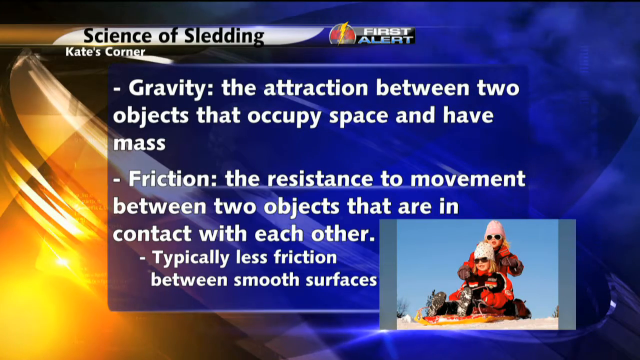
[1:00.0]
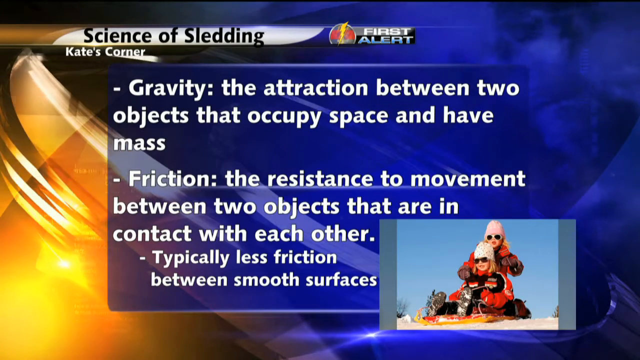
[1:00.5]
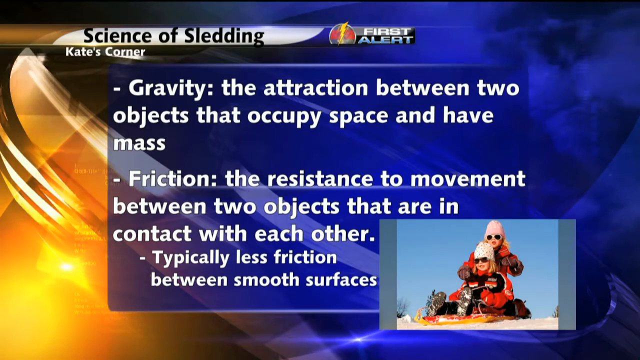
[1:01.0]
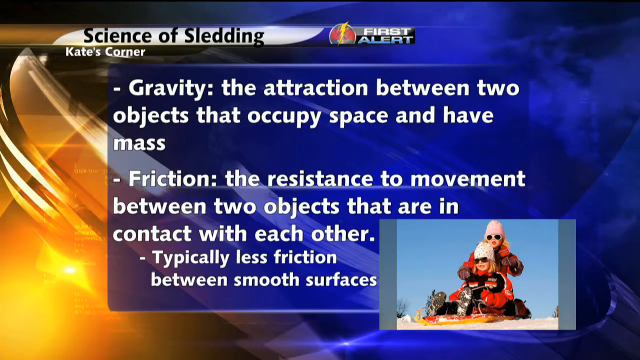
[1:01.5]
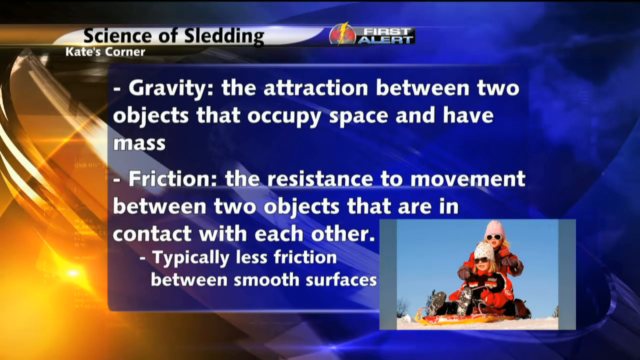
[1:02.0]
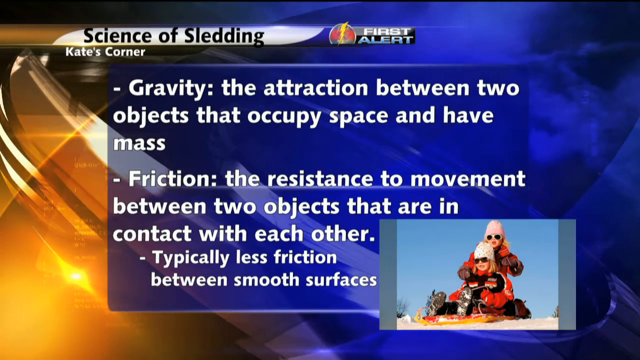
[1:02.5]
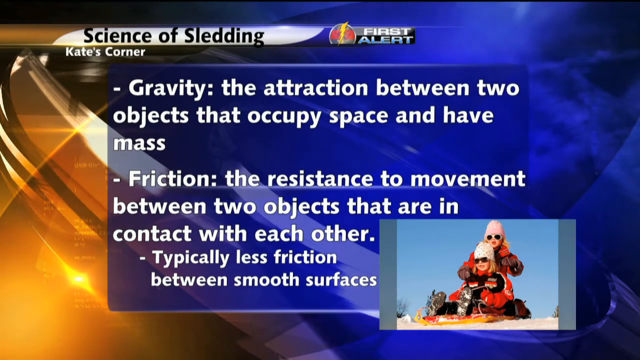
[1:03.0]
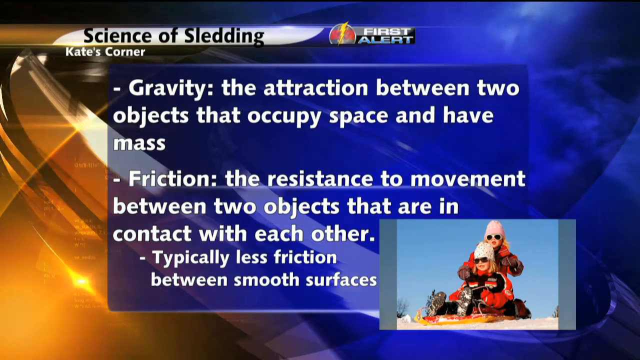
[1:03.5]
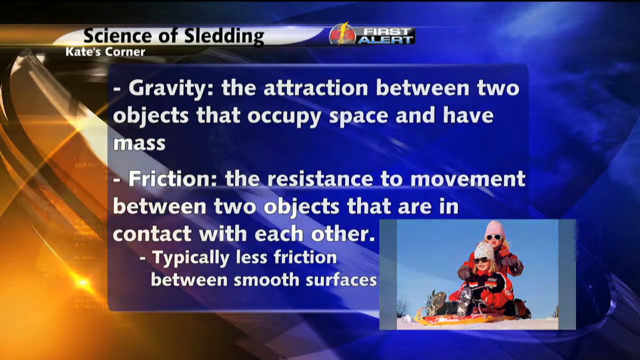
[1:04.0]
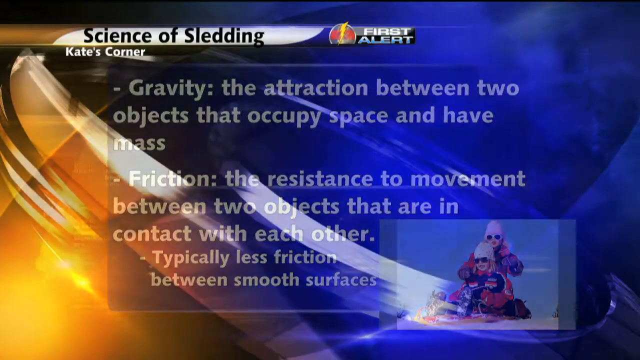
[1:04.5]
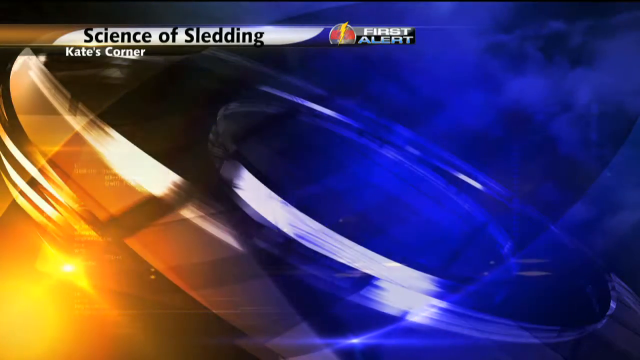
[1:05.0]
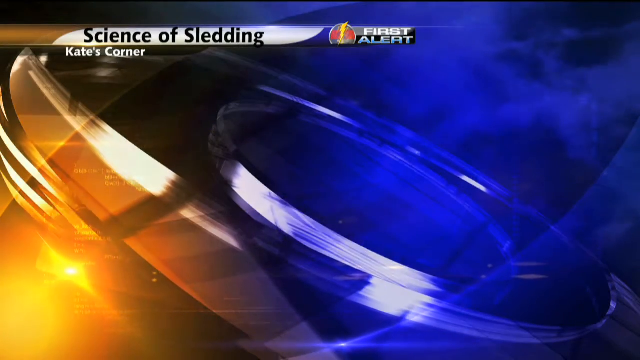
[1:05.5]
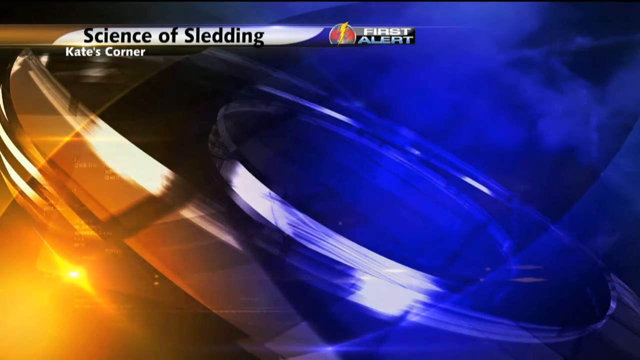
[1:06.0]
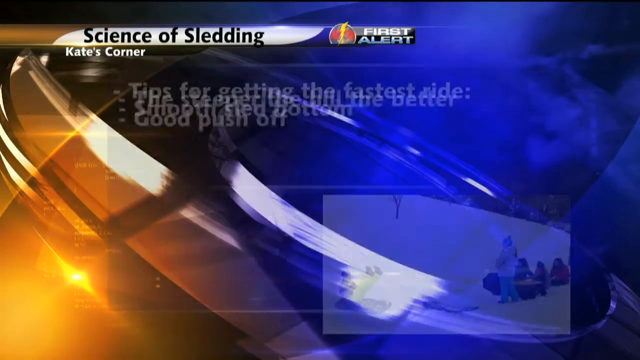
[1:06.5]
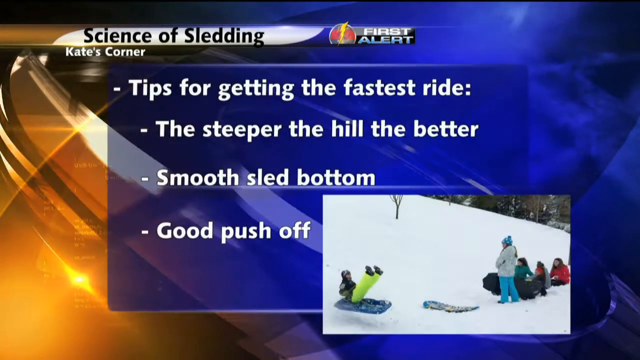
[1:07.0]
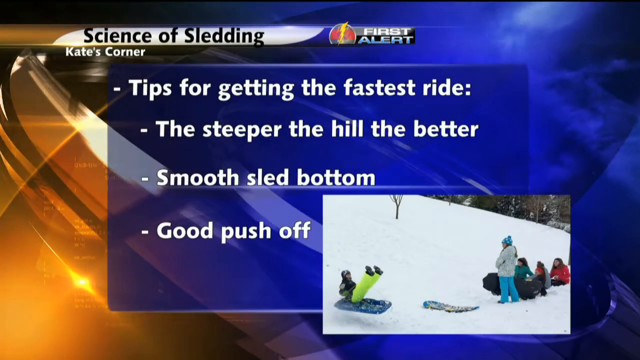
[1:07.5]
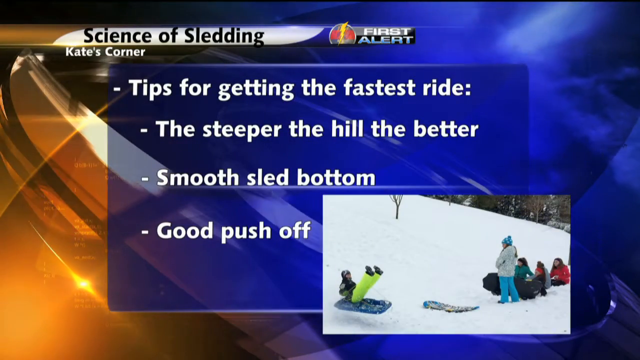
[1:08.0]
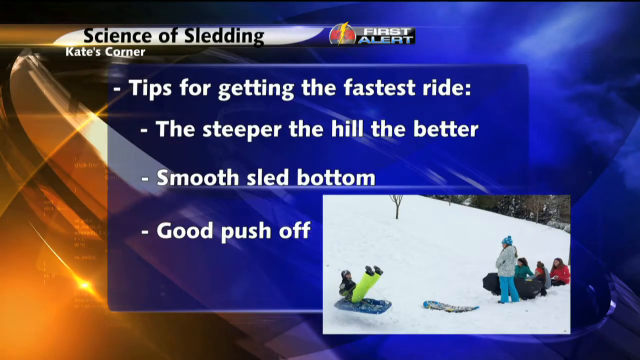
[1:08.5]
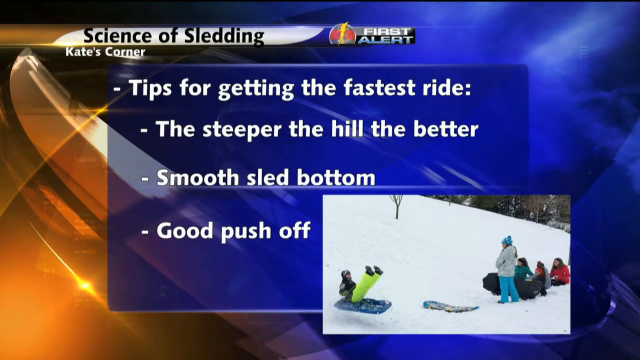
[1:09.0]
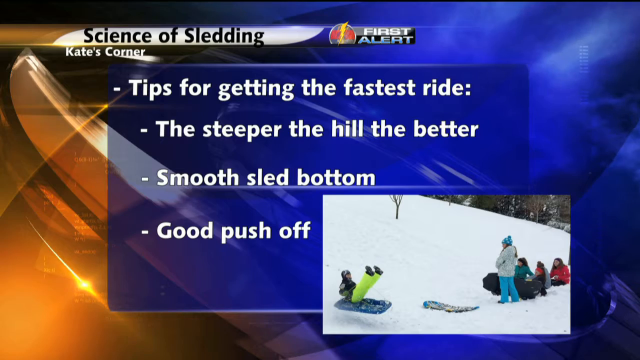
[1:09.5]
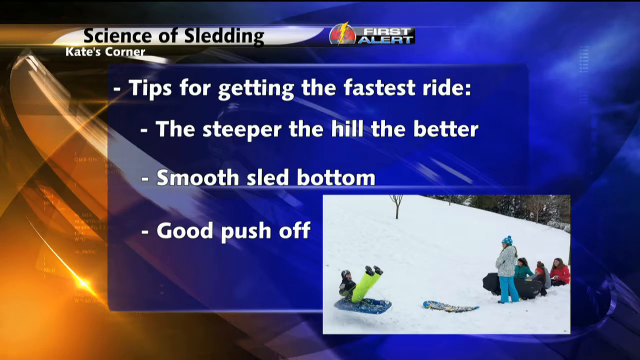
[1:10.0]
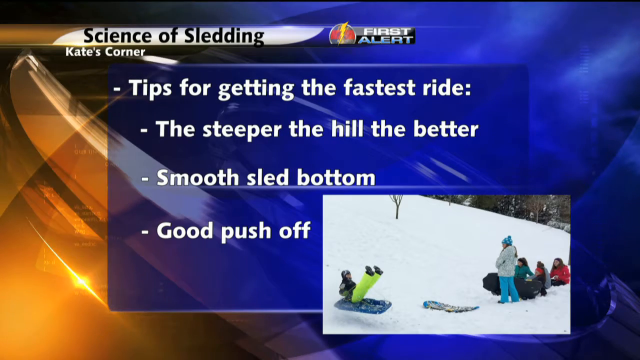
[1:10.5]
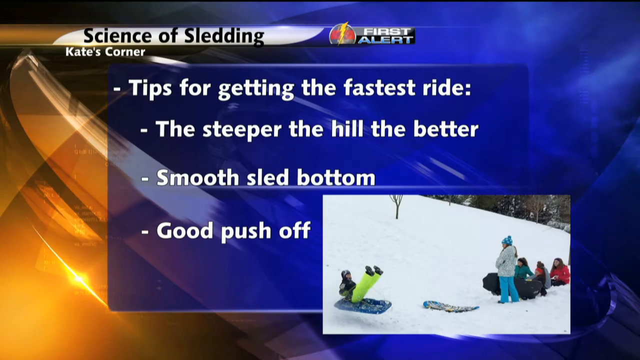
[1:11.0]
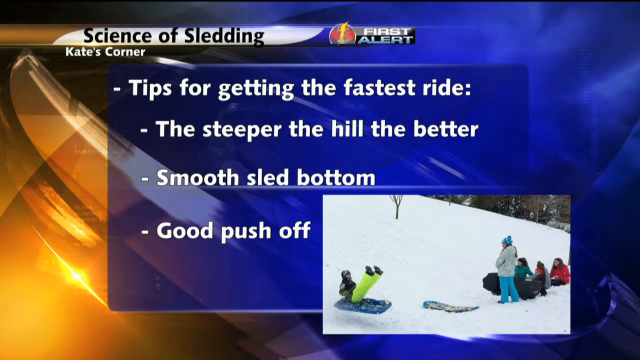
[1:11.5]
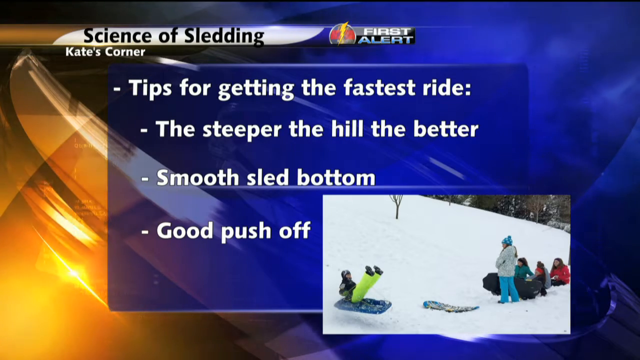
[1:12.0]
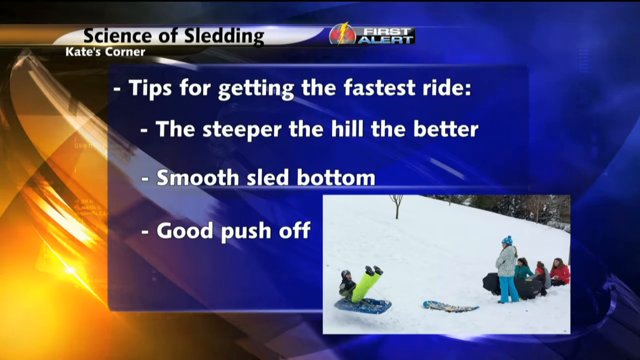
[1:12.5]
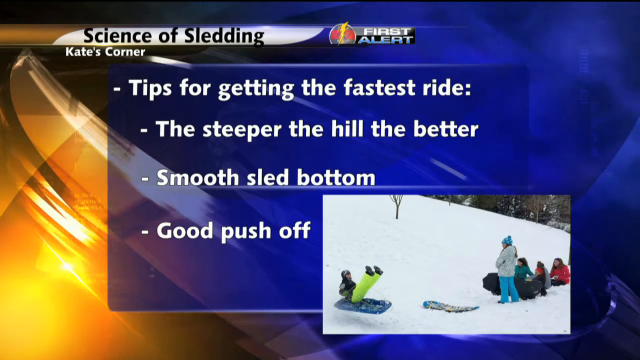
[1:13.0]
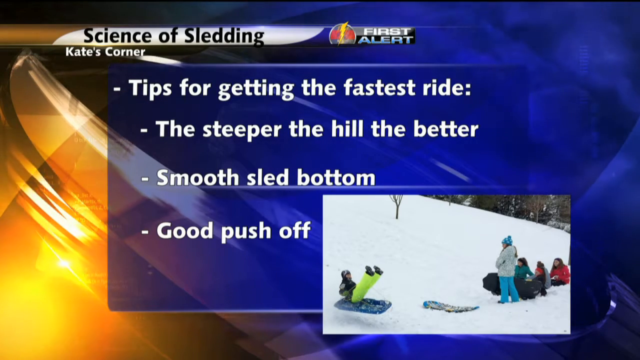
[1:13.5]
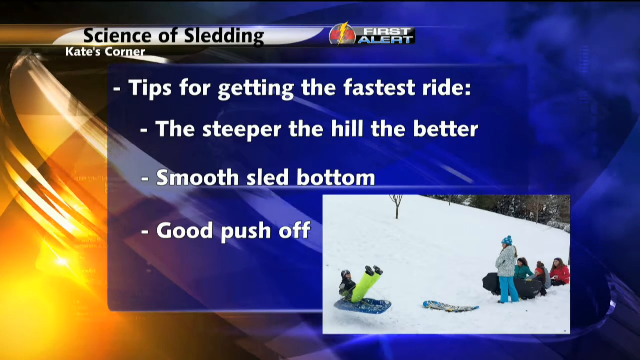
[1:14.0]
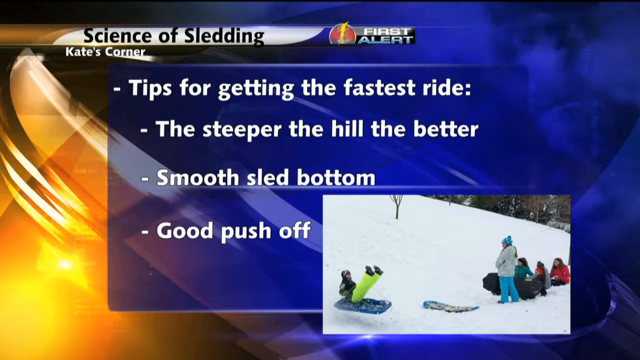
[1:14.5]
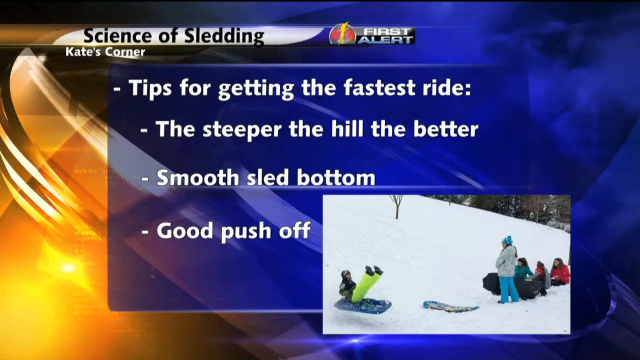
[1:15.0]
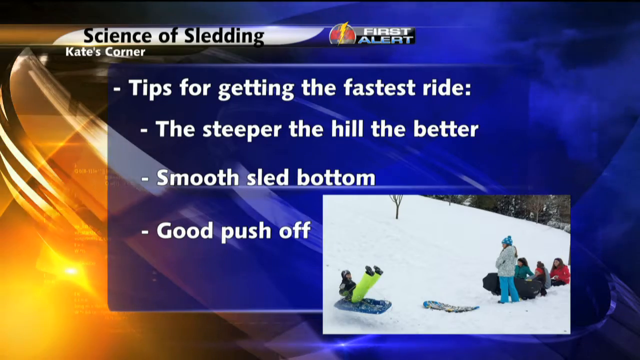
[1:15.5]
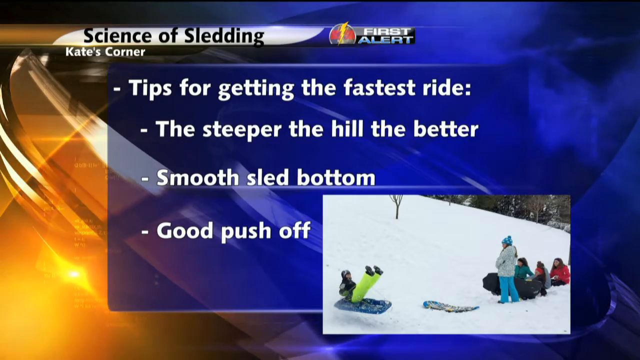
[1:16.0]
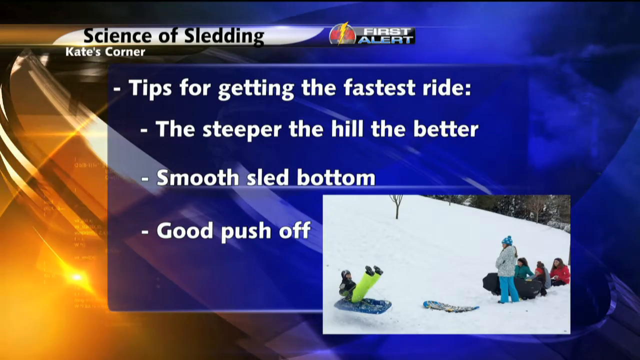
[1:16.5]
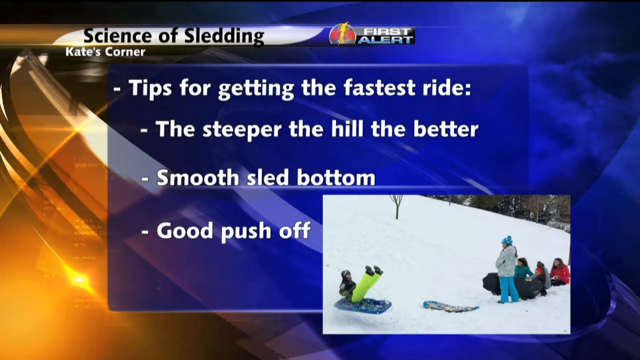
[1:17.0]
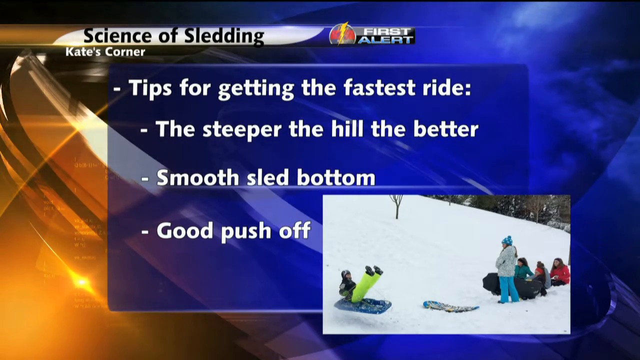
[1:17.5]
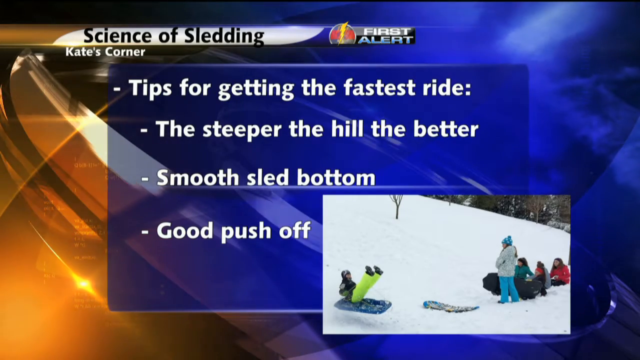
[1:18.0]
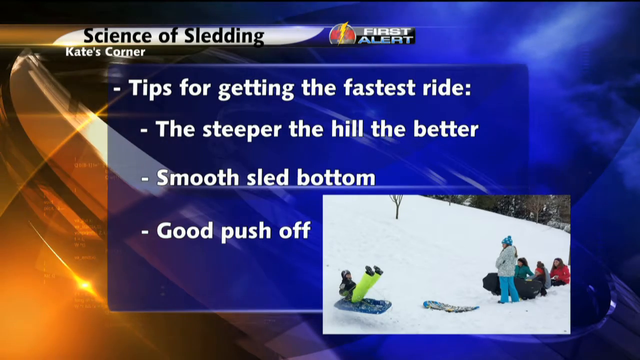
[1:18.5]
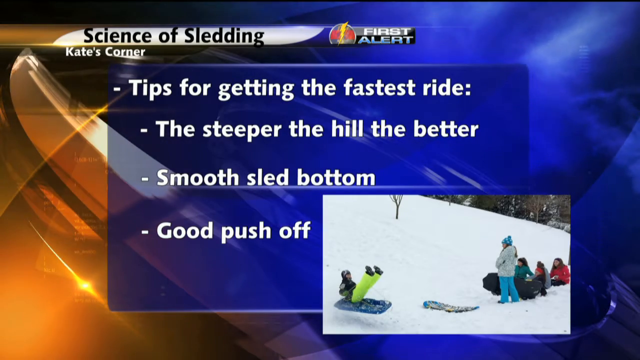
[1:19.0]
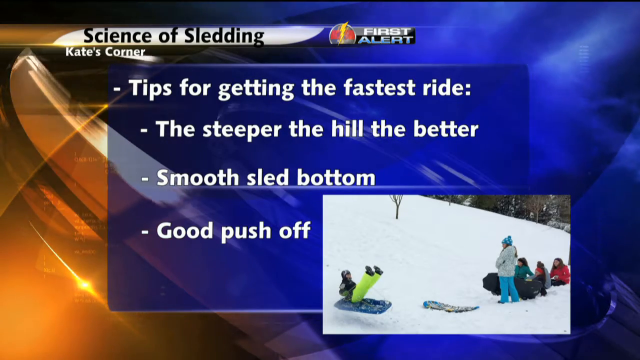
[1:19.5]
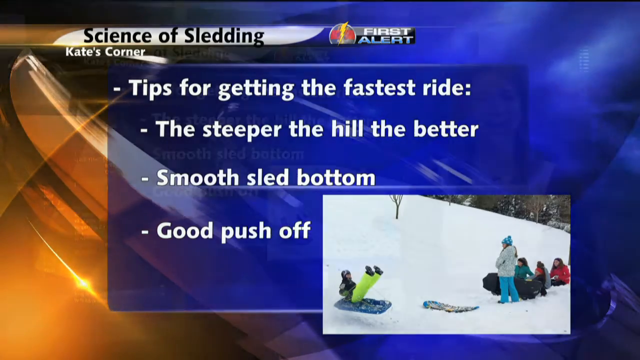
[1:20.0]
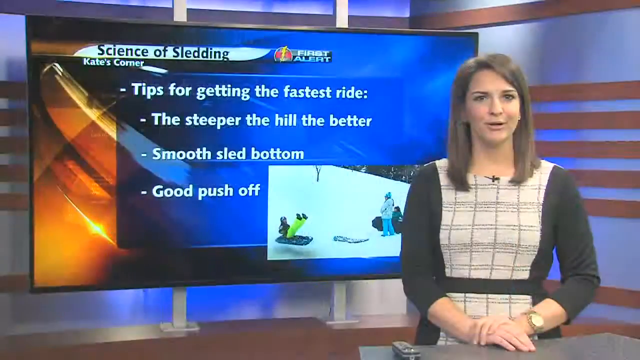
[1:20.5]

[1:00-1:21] The news segment is titled "Science of Sledding," with the first alert logo of the news station to the right of the title and "Kate's Corner" underneath it. In the lower right corner, next to the text, two kids sled down a hill on a sled that looks yellow. They wear red and black clothing and sunglasses, and appear to have blonde hair about shoulder length. The sky behind them is a clear blue. The text reads: "gravity, the attraction between two objects that occupy space and have mass, friction, the resistance to movement between two objects that are in contact with each other, typically less friction between smooth surfaces." The segment then transitions to the next part, which reads: "tips for getting the fastest ride, the steeper the hill, the better. Smooth sled bottom, good push-off." The image in the right corner now shows people sledding: three or four people on the right are holding their sleds or sitting on them, and on the left a person reaches the bottom of the hill sitting on a blue sled with their legs up in the air, wearing lime green or lime yellow leggings and a black coat.